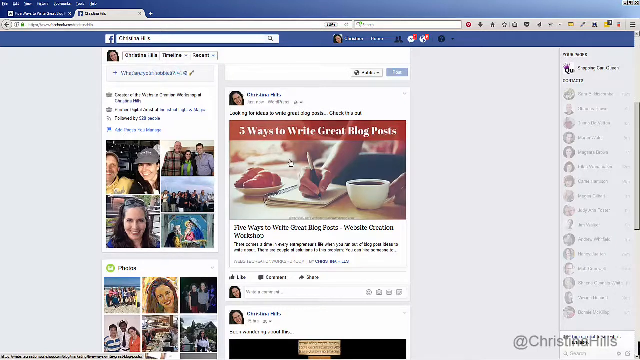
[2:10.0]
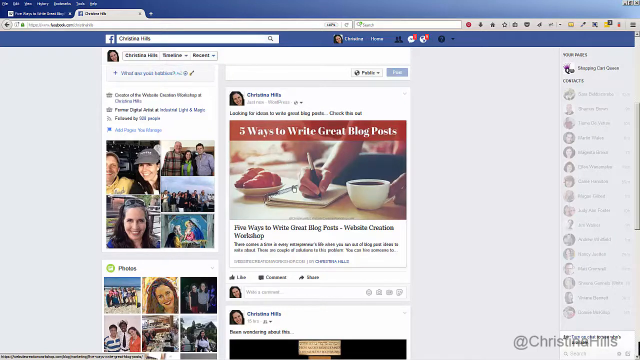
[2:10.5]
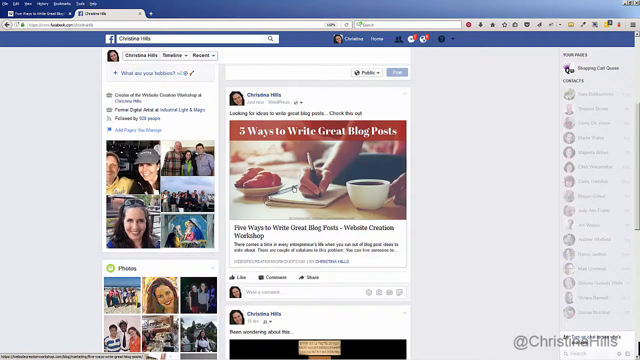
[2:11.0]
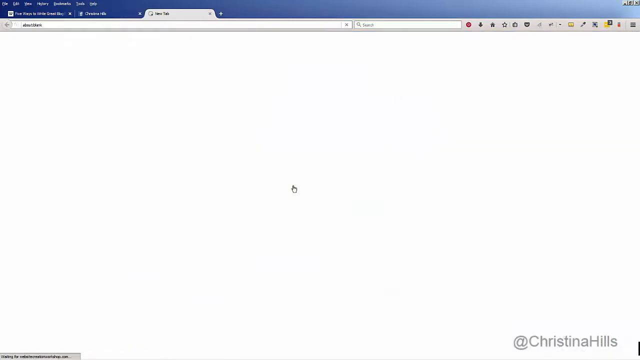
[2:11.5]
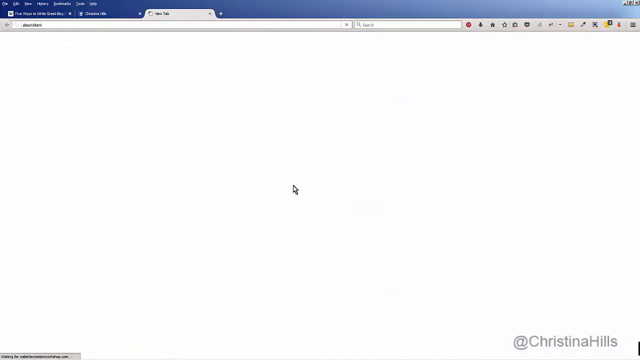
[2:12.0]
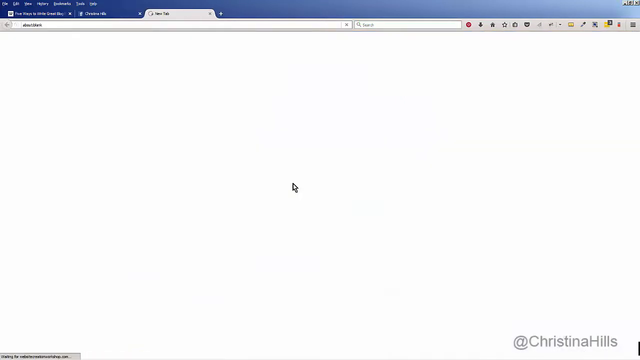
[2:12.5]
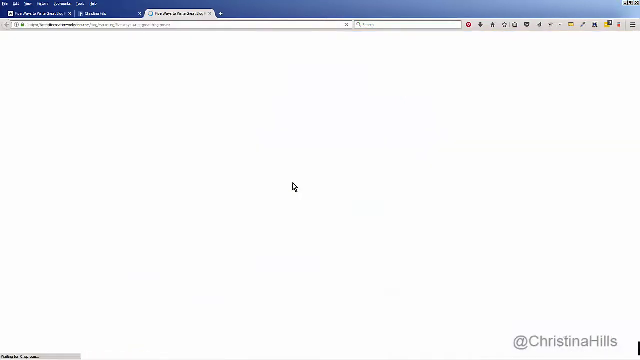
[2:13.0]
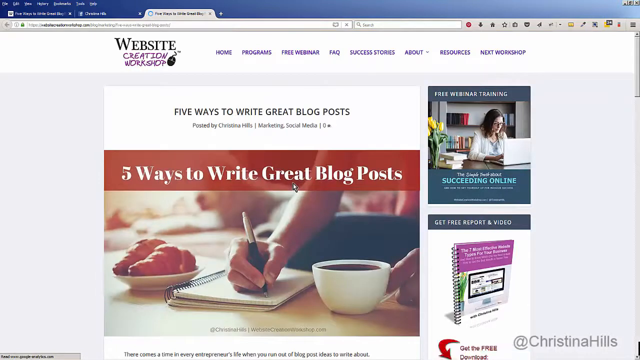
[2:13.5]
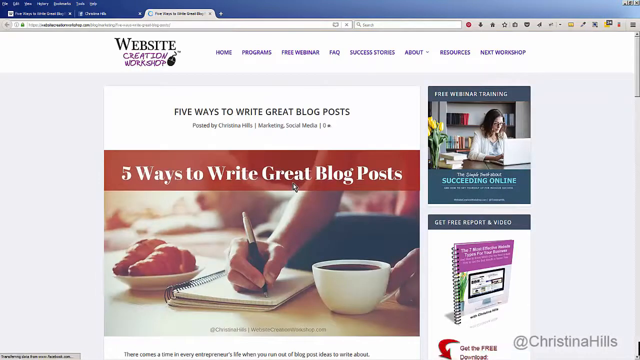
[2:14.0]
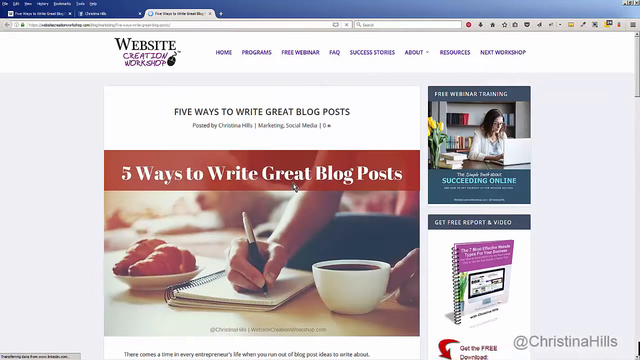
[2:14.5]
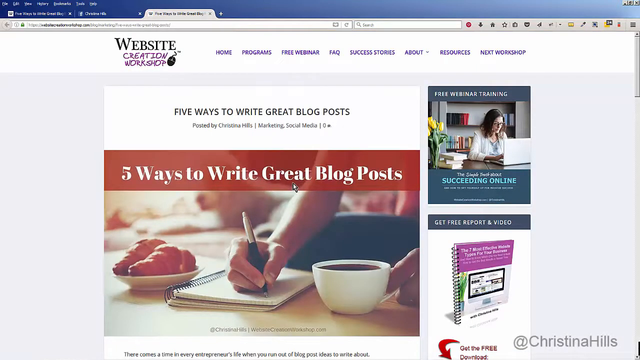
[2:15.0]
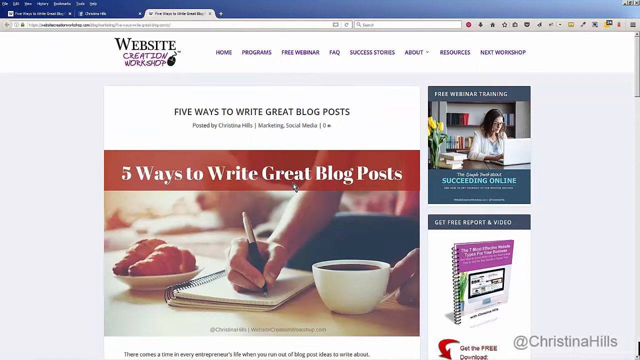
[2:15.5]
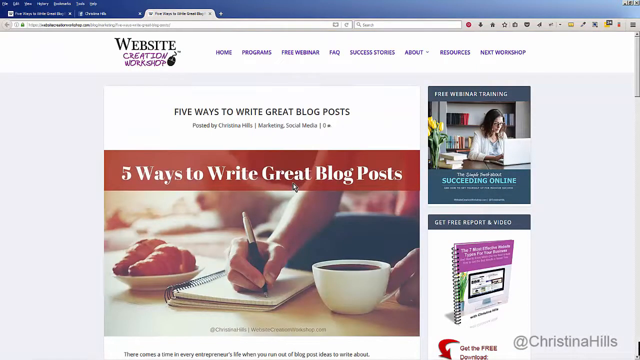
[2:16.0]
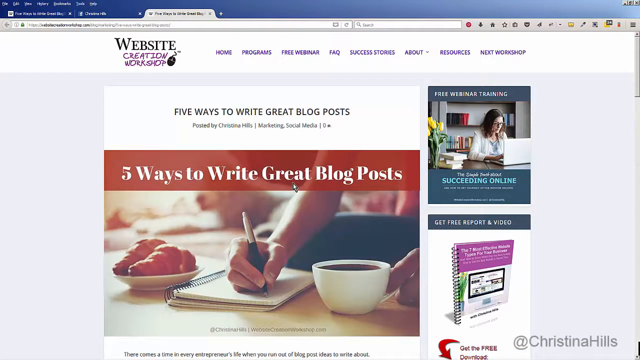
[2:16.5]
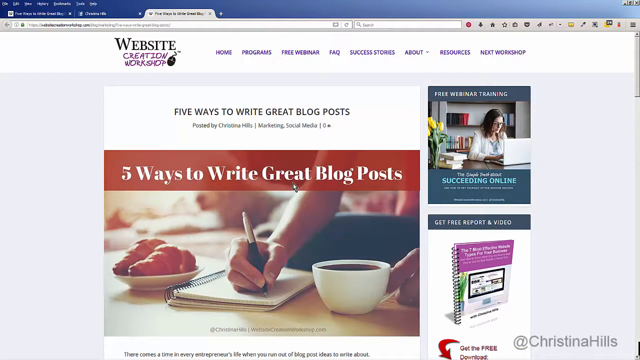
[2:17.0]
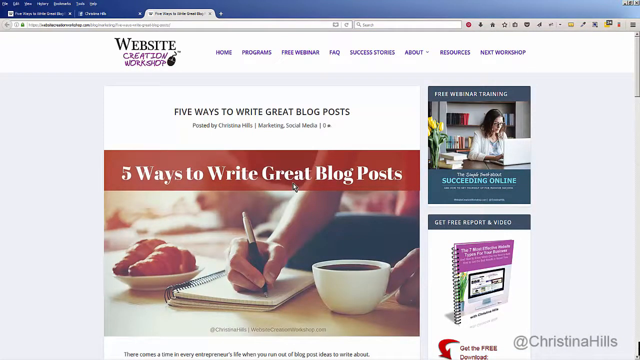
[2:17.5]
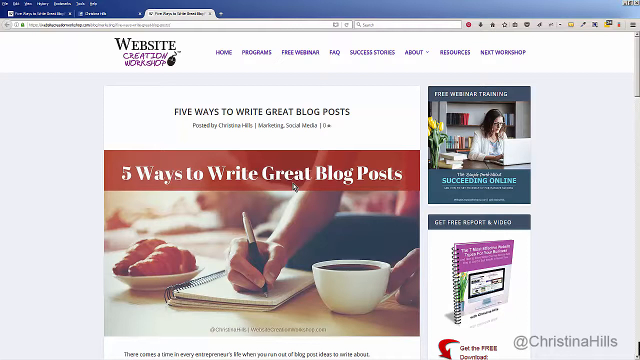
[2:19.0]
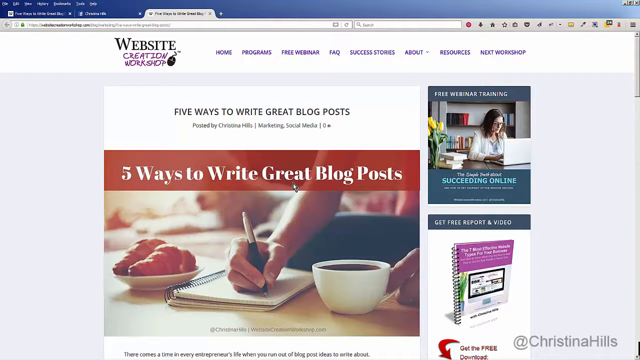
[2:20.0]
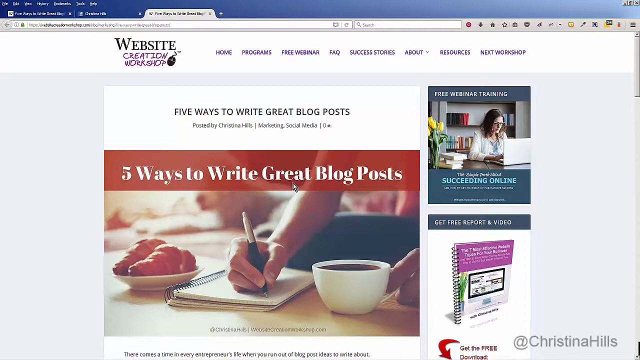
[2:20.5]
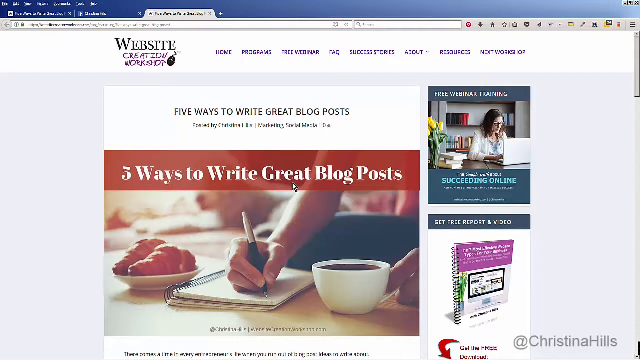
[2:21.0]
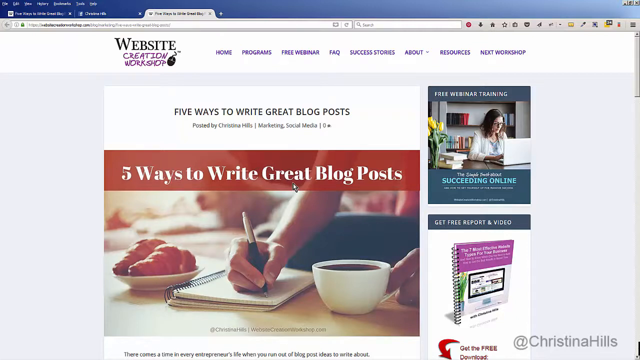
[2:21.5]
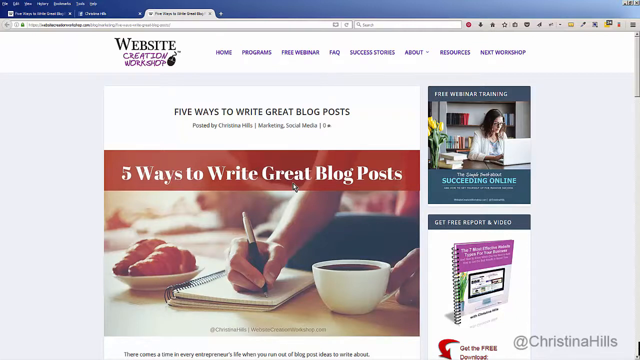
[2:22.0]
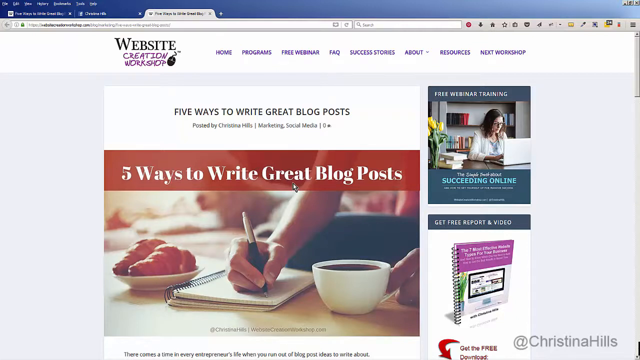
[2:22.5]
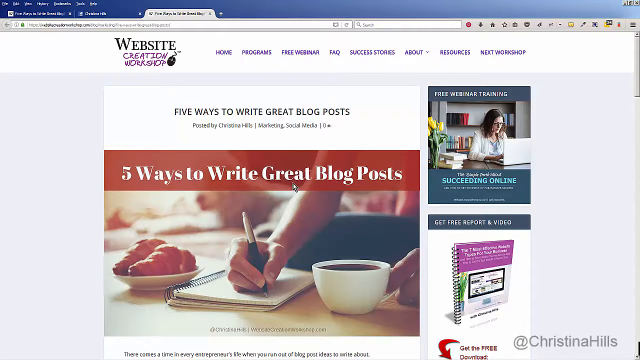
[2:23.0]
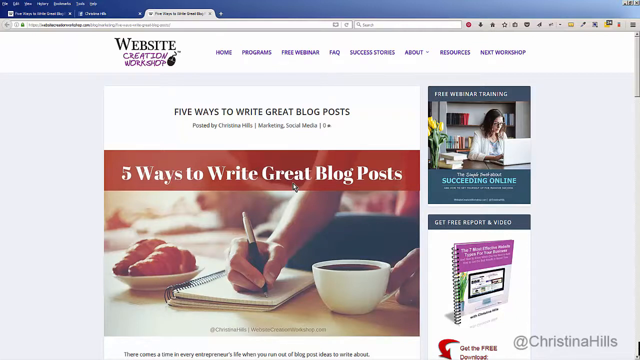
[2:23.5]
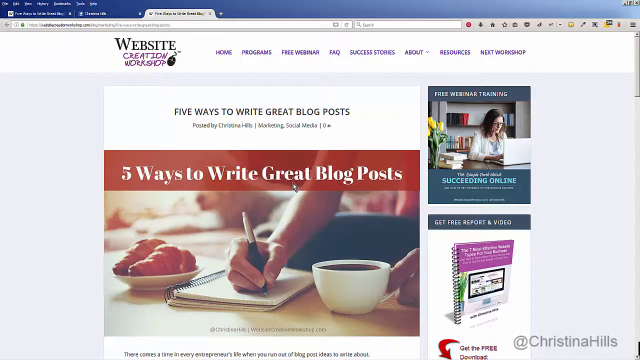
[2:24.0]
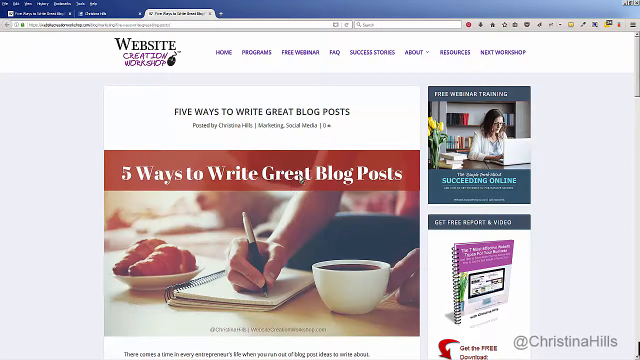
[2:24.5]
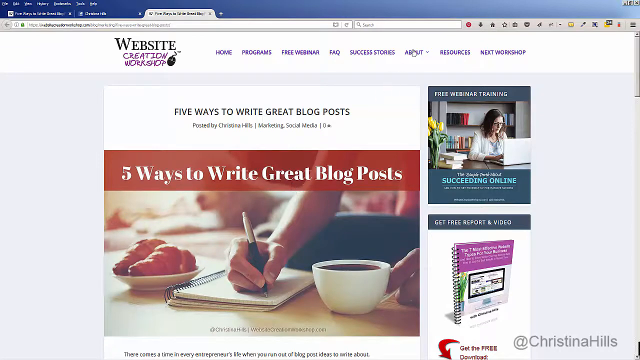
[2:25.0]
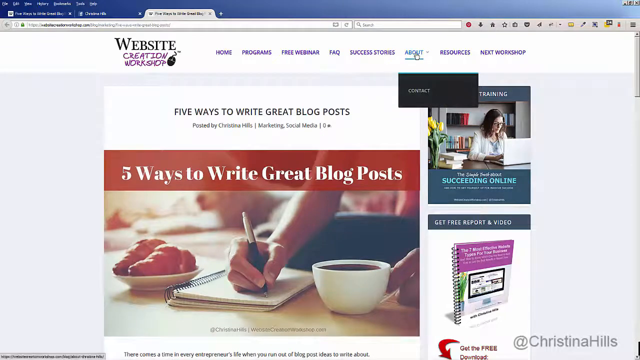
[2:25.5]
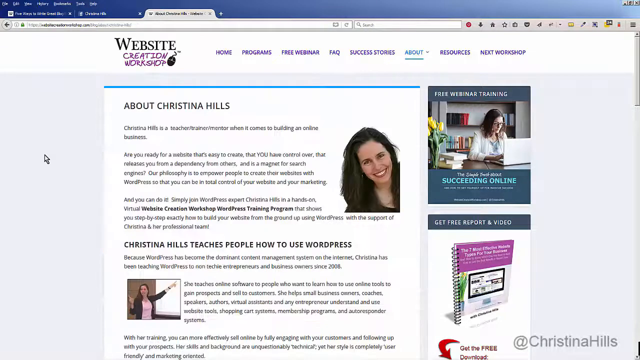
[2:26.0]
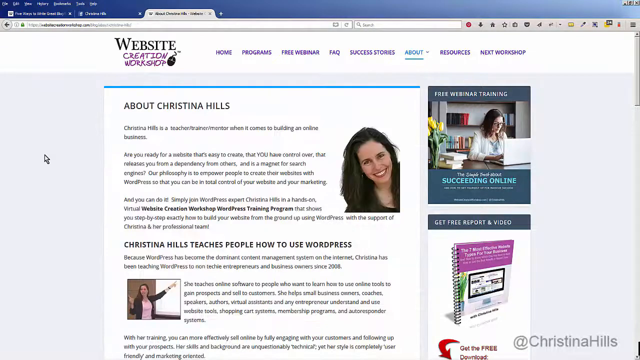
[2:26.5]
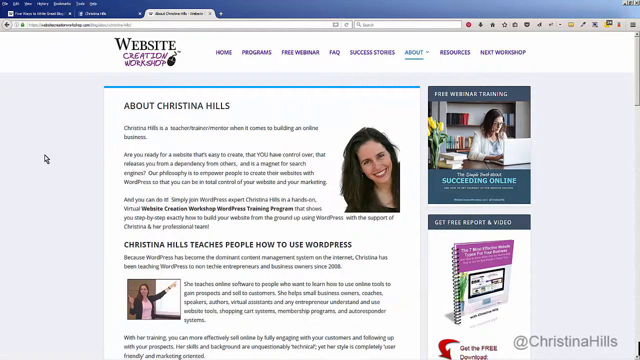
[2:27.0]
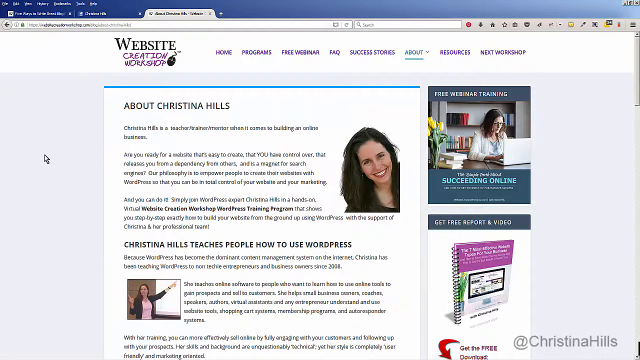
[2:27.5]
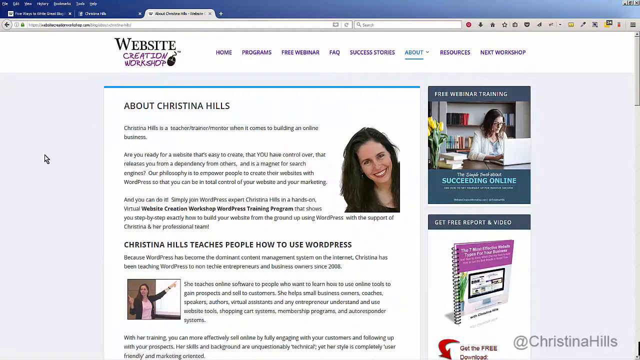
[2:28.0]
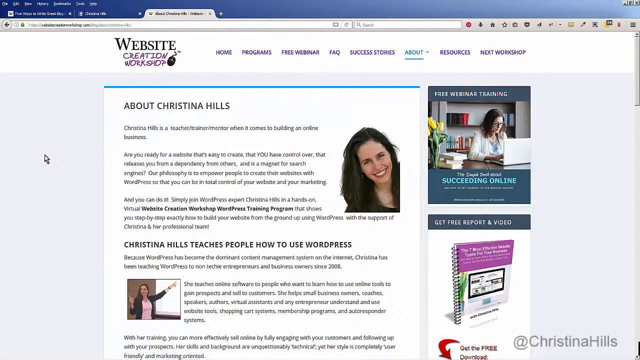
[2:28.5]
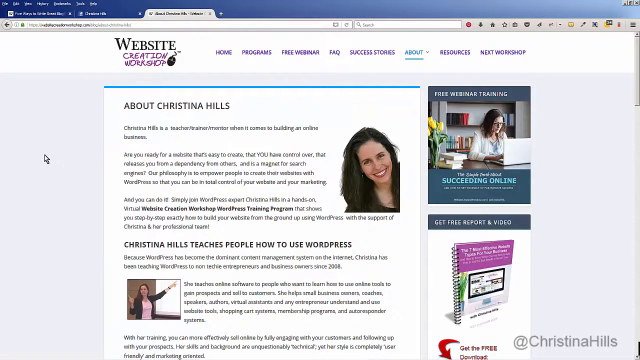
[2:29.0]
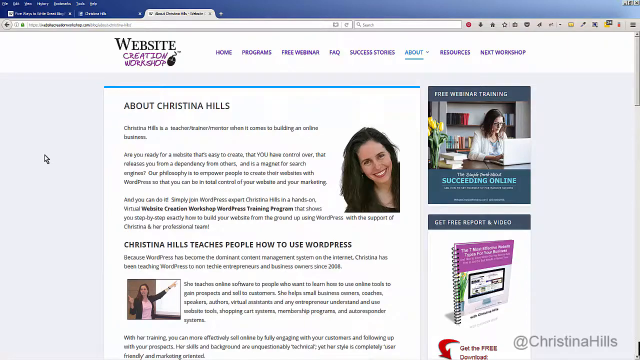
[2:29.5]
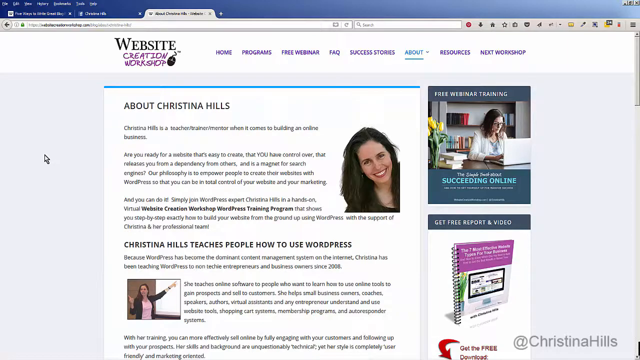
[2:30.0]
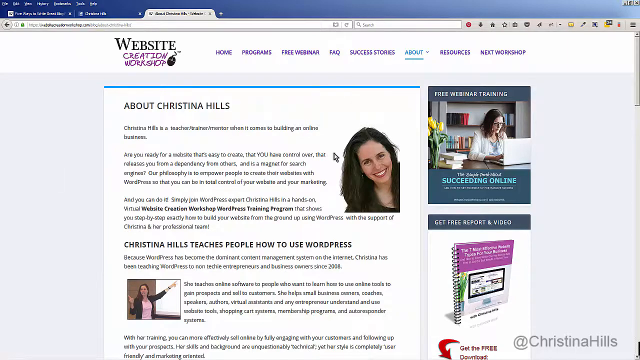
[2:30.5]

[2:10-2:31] Someone opens a new tab on a computer screen. The page that appears is for the Website Creation Workshop, with an article entitled "5 Ways to Write Great Blog Posts" at the top. Below it is a photograph of someone writing in a notepad with a pen held in their right hand and holding a white coffee cup in their left hand. The cursor clicks the About navigation link at the top of the page, which changes to a page with a photograph of a woman named Christina Hills and an "About Christina Hills" paragraph next to it, also part of the Website Creation Workshop site. Below the introductory paragraph is a second header that reads "Christina Hills teaches people how to use WordPress." Another photograph shows the same woman, who appears to be standing in front of a whiteboard or video screen, pointing toward it with her left hand as she turns to face people on her right side; it looks as if she is giving a lecture of some kind.